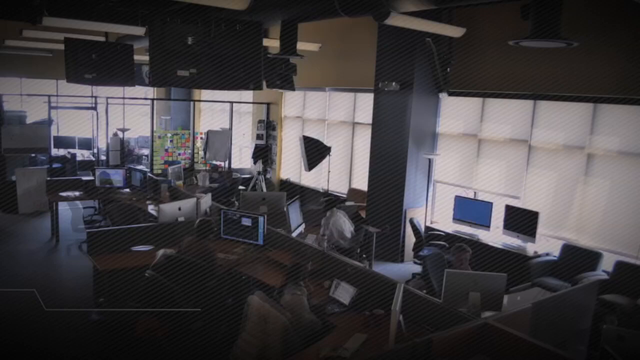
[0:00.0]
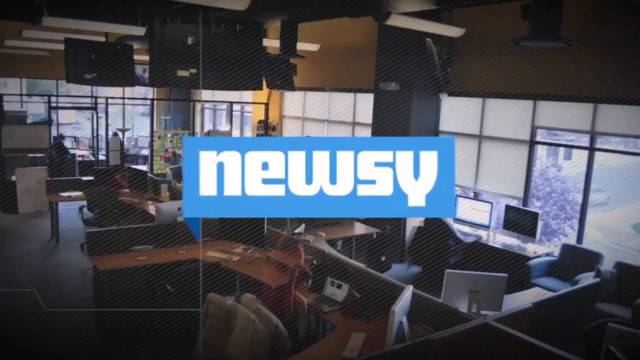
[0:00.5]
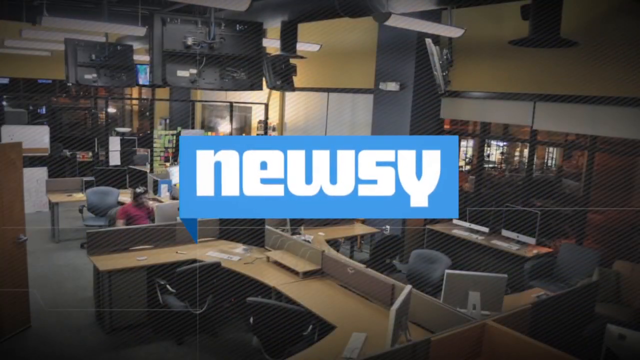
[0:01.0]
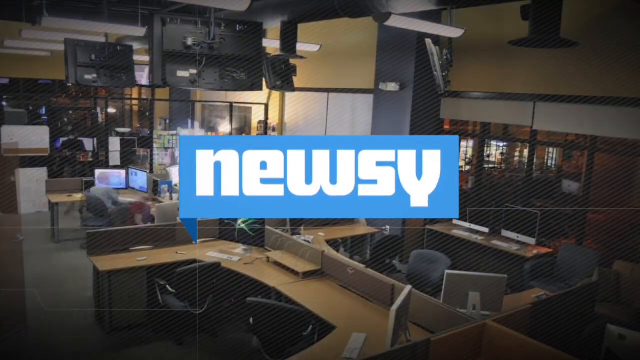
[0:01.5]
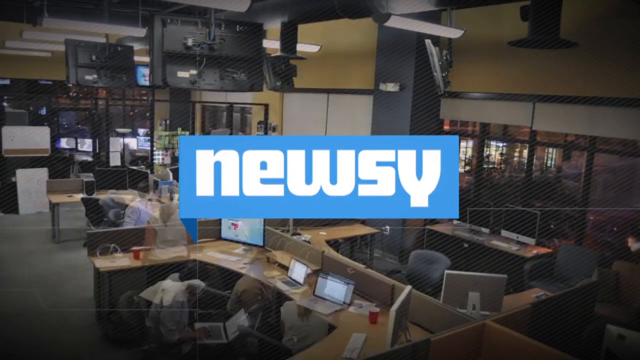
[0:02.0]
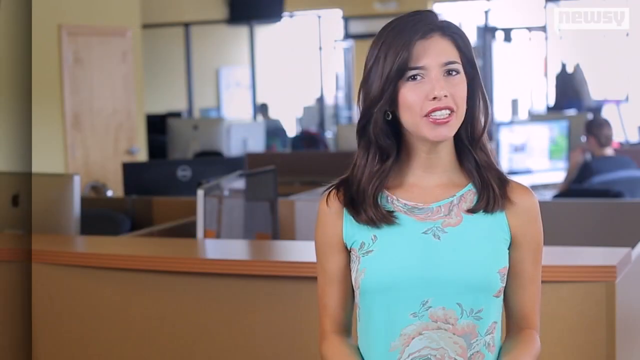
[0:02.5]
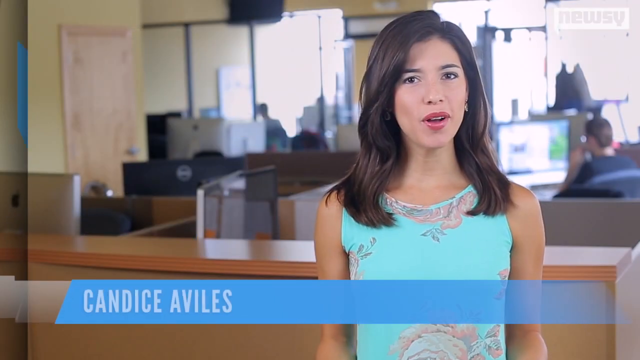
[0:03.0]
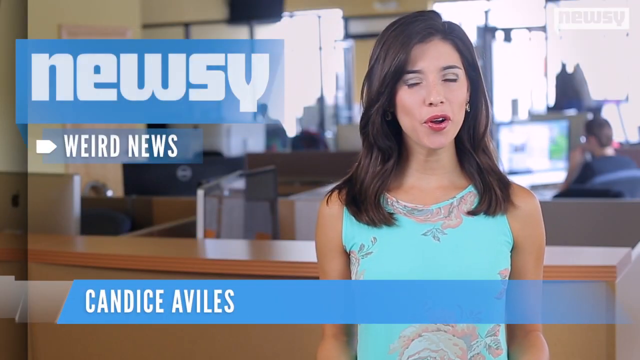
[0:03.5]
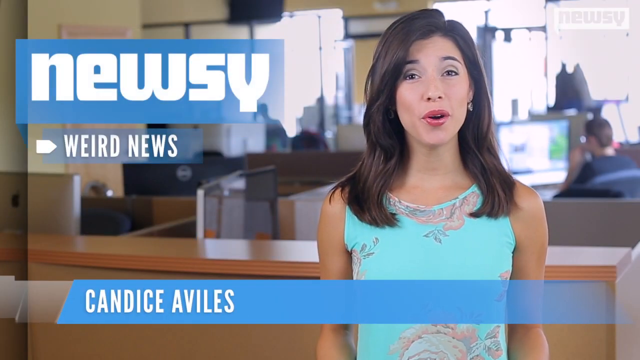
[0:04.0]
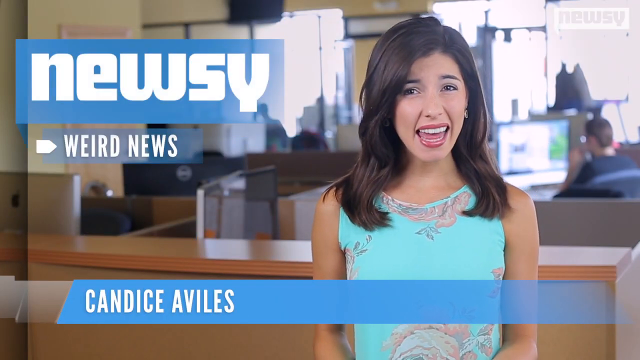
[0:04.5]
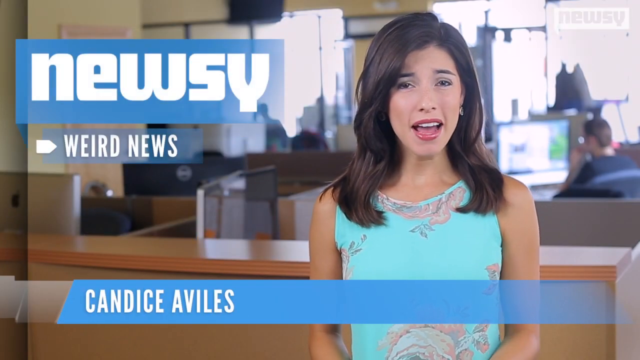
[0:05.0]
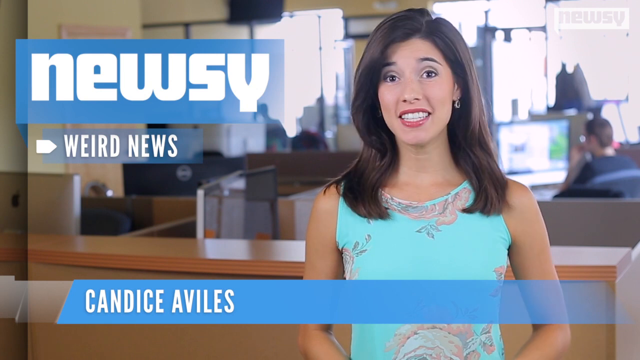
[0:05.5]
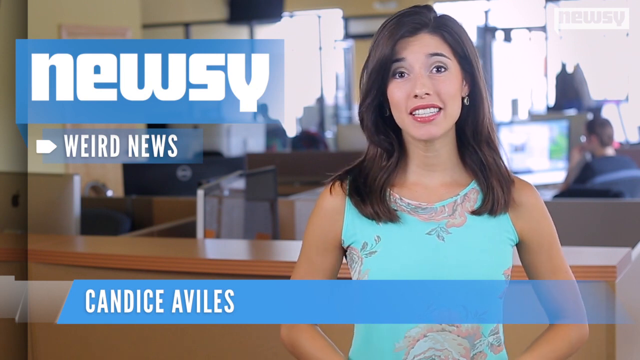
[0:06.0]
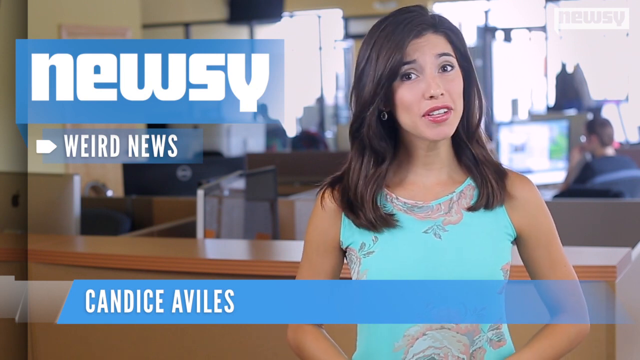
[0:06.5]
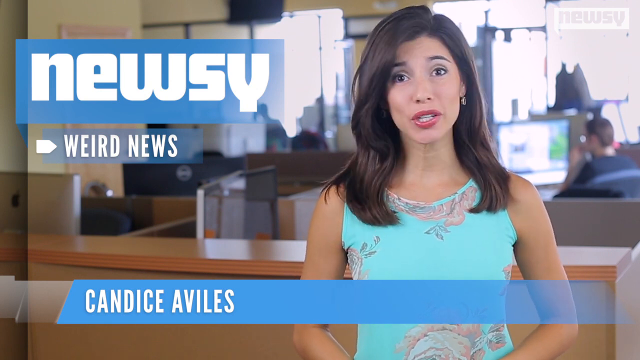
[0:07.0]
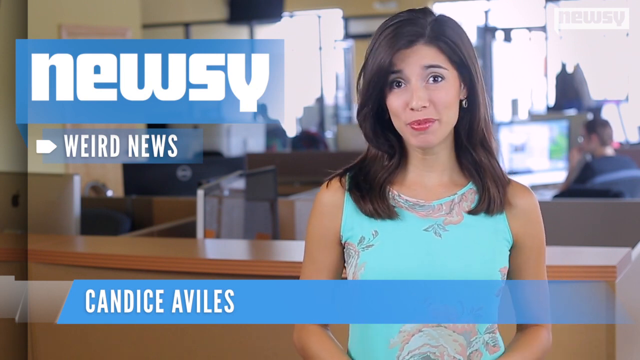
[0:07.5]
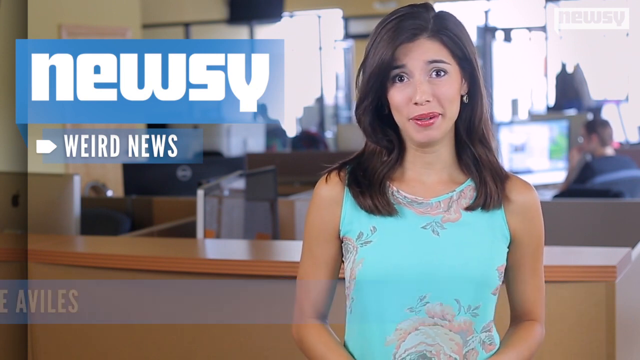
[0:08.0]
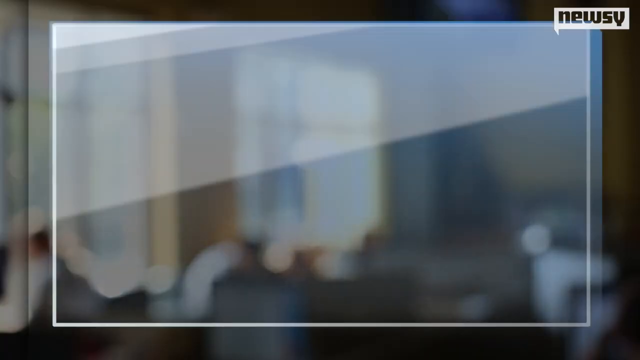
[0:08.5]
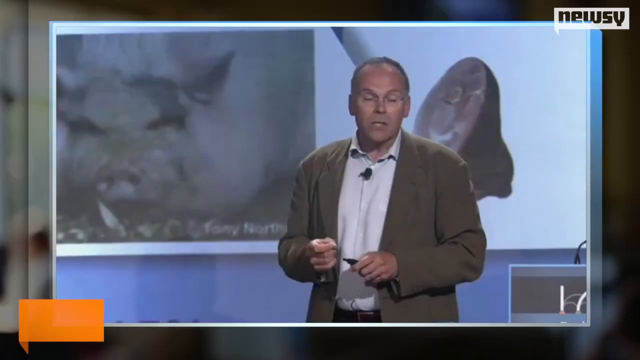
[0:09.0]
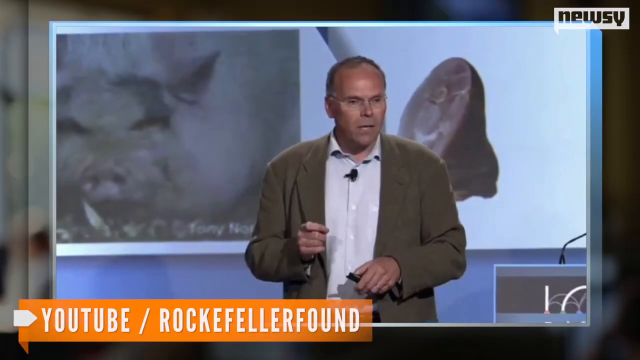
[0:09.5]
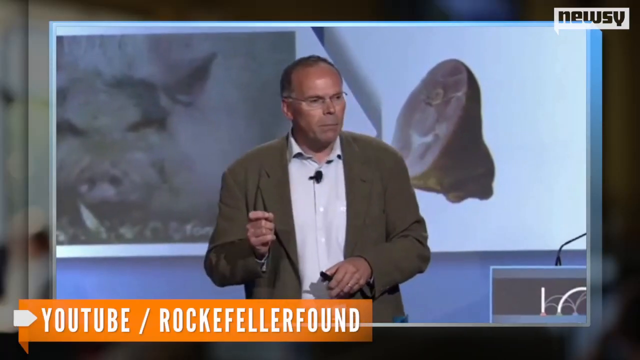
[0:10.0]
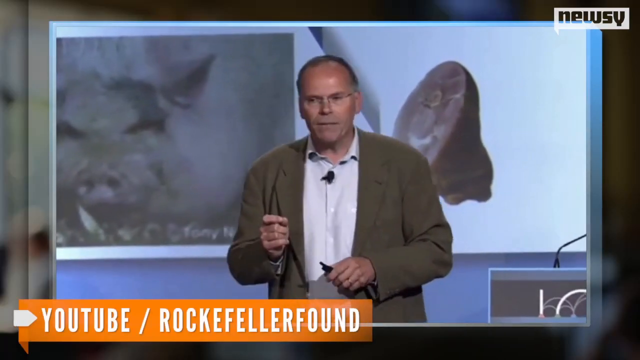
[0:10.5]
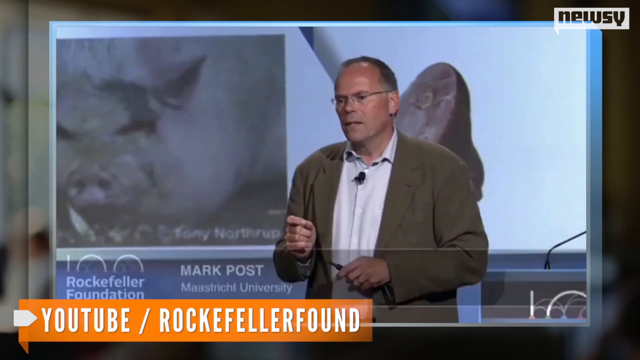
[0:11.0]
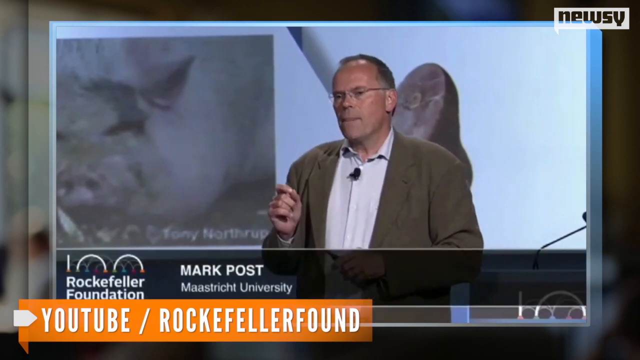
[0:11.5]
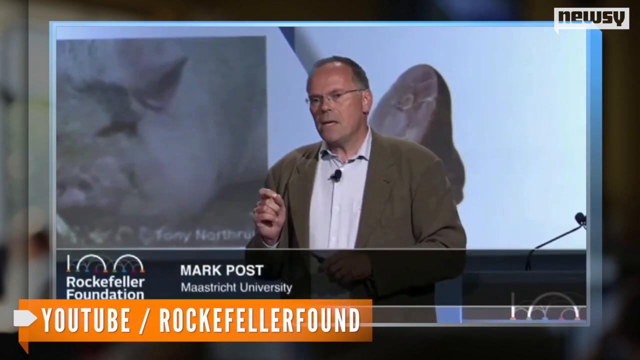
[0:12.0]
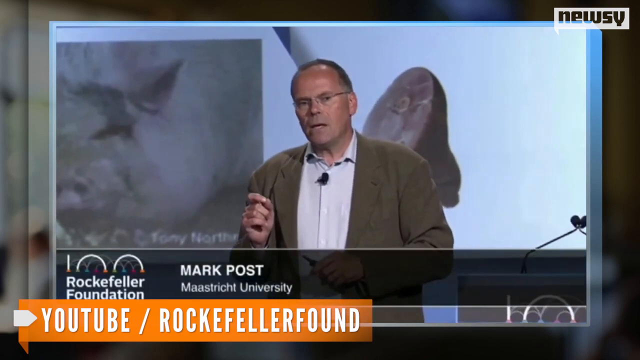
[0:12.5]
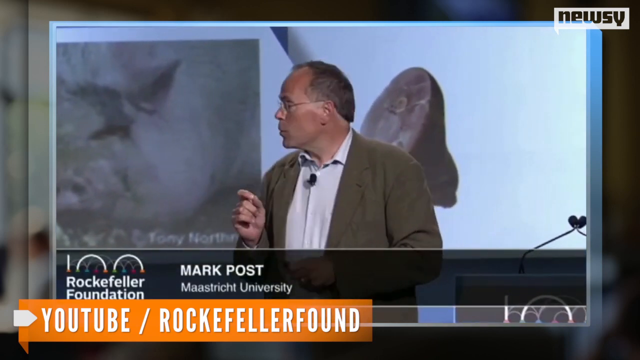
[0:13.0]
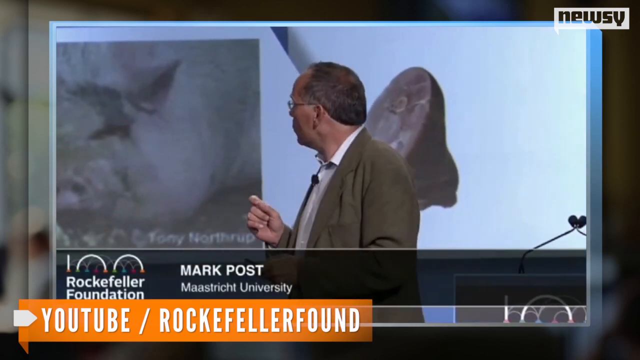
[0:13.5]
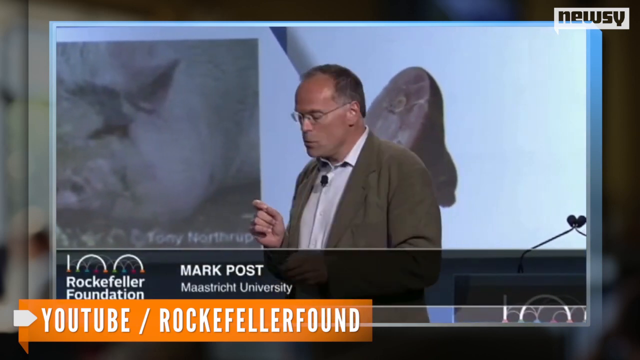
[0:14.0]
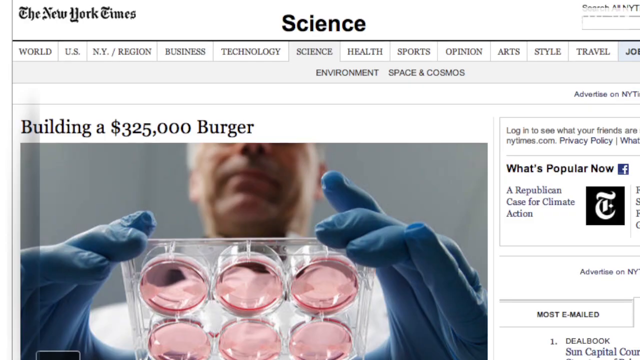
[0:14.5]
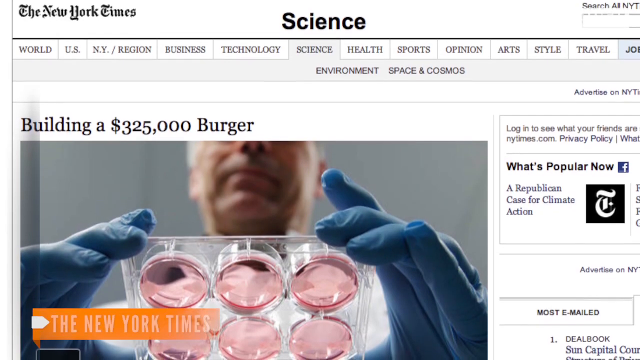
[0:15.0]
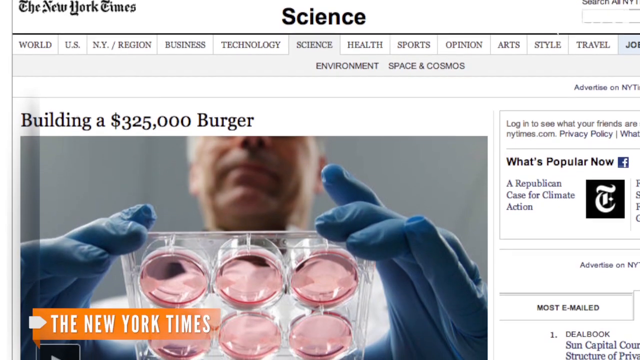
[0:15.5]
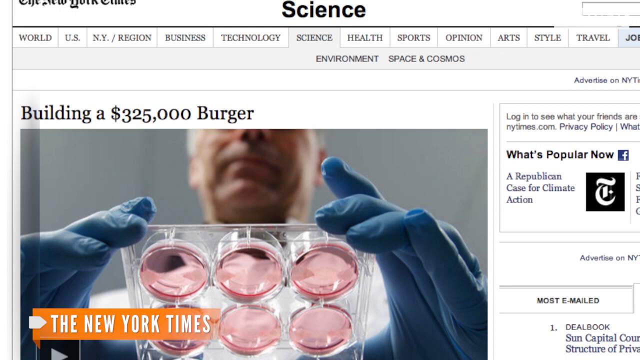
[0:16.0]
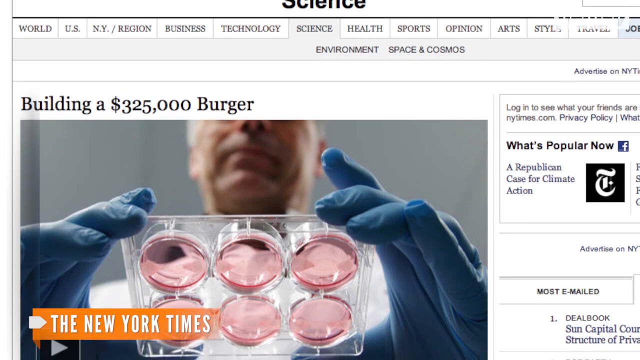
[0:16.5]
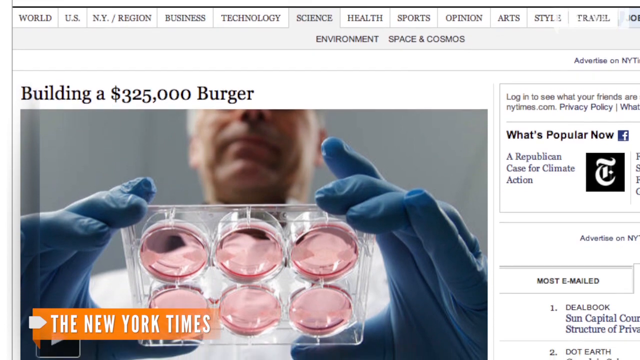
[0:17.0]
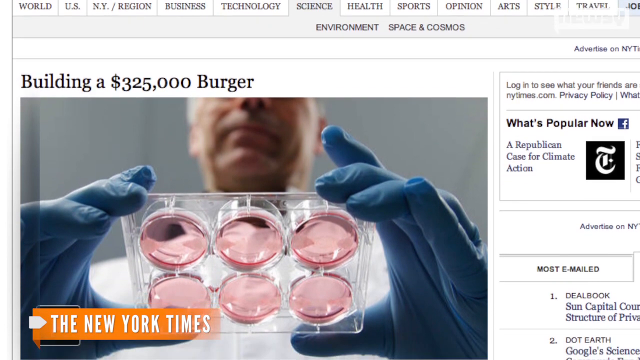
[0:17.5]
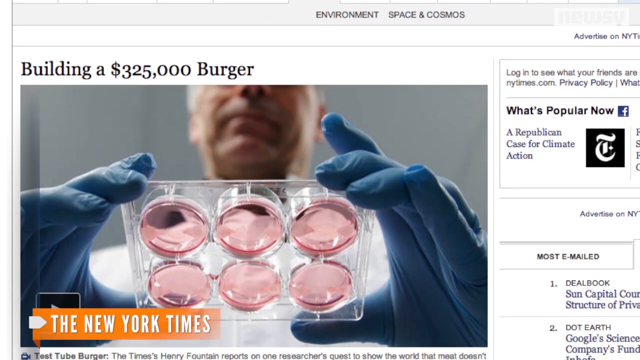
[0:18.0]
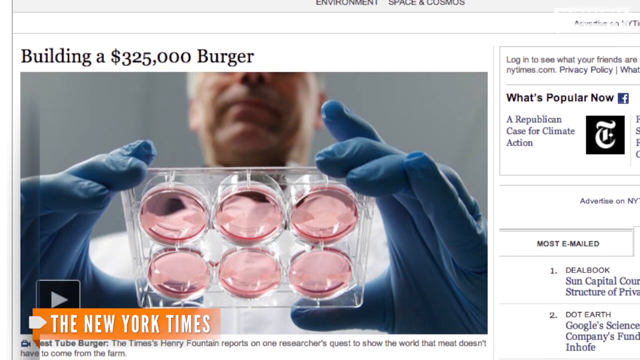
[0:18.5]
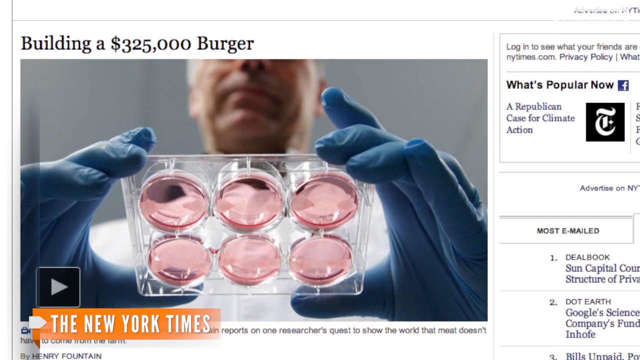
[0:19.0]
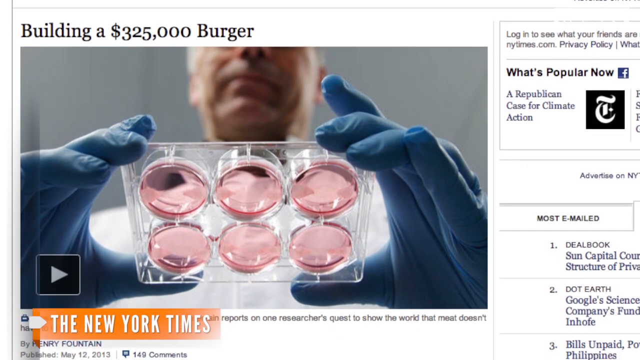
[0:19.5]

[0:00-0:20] The show is called "Newsy," and the headline on screen reads "weird news." The presenter is named Kentis Aviles, a young woman who seems to be 30 to 35 years old, wearing a light blue sleeveless top. The show's theme seems to be blue and white; the blue is a light blue, neither navy nor royal. An old man named Mark Puth from Maastricht University is featured. Light pink products are visible, seemingly in a batch of six, and they are being held. The background of the room seems to be a place where people are working.